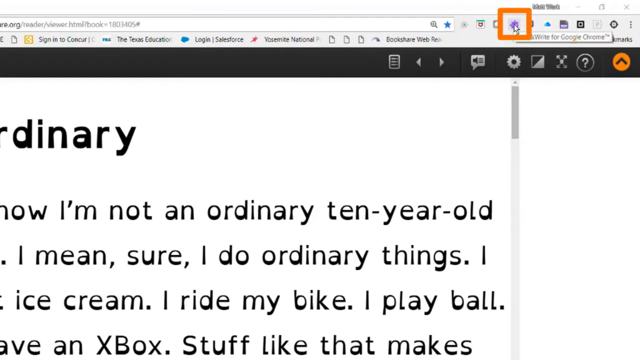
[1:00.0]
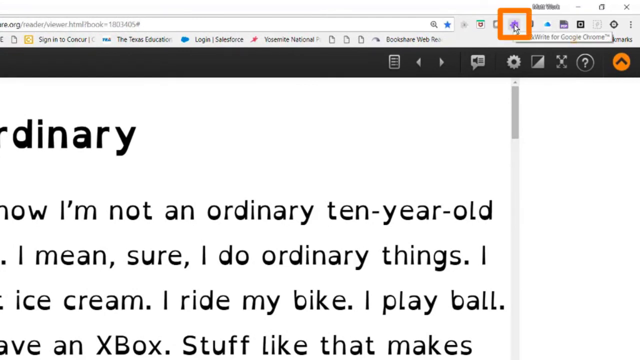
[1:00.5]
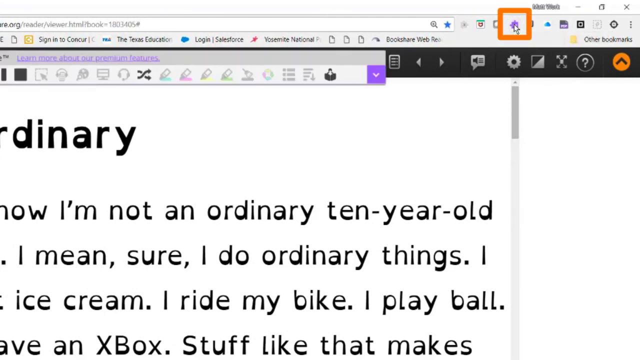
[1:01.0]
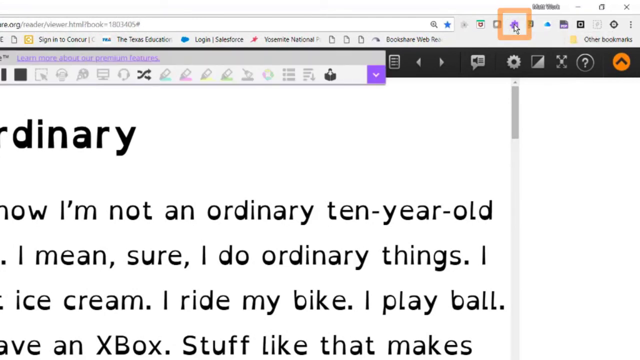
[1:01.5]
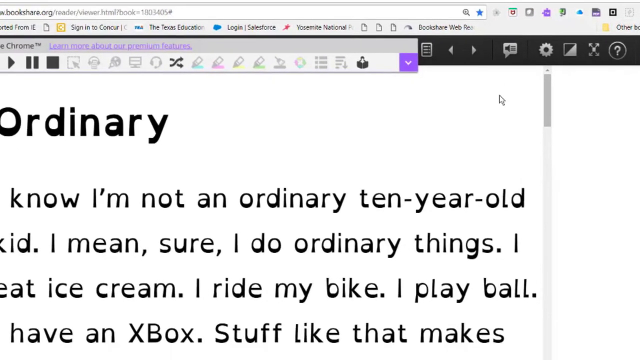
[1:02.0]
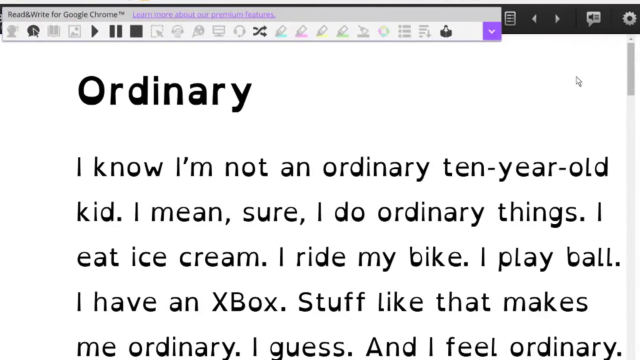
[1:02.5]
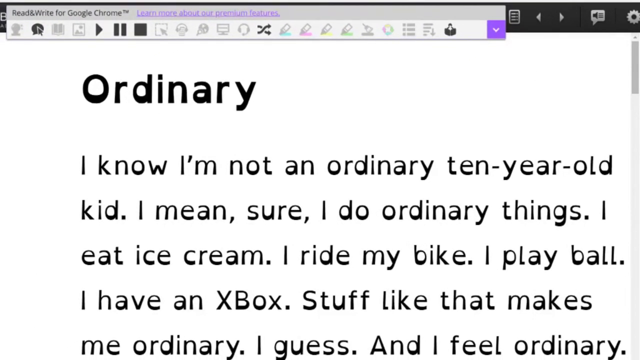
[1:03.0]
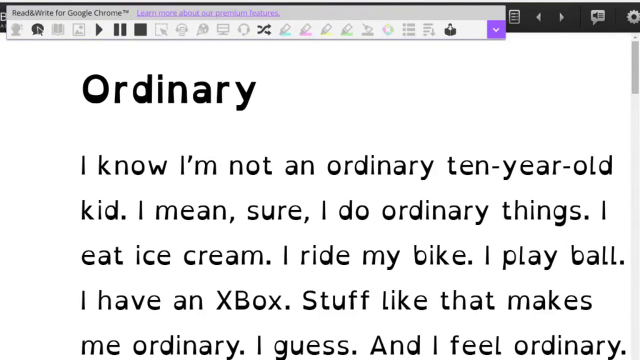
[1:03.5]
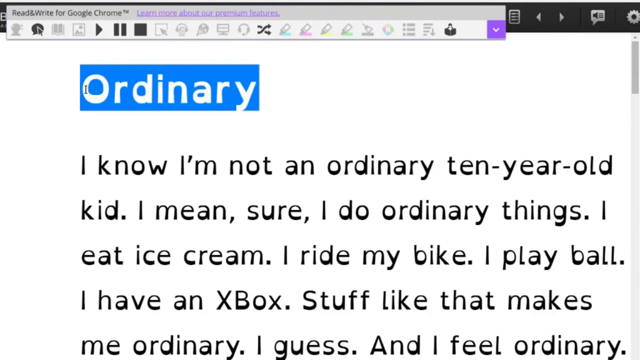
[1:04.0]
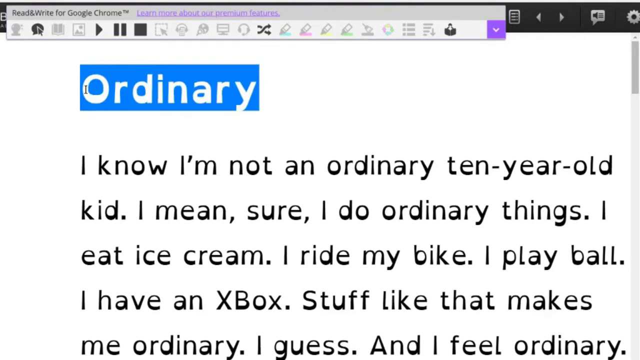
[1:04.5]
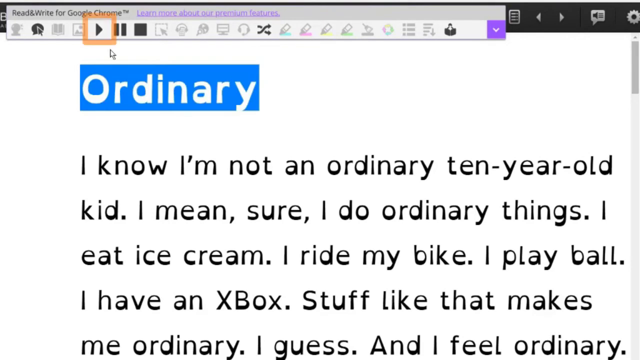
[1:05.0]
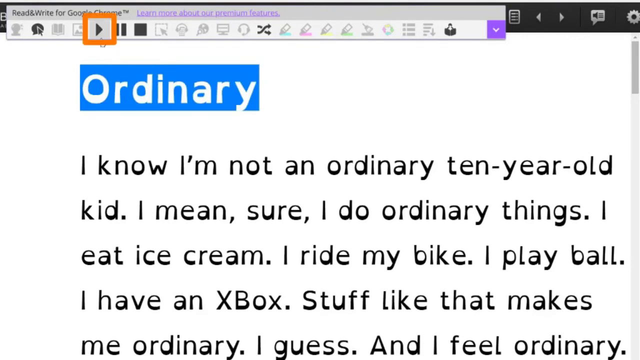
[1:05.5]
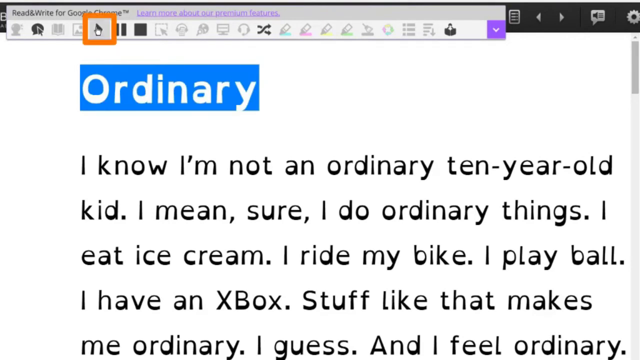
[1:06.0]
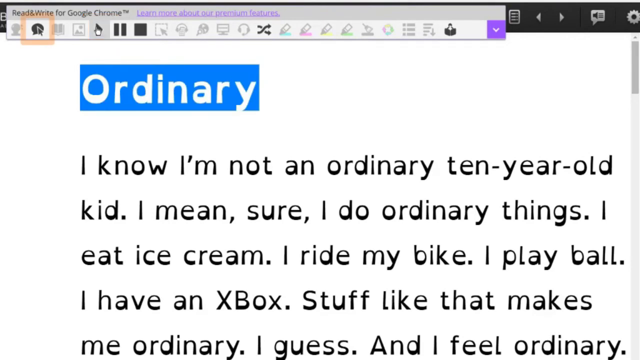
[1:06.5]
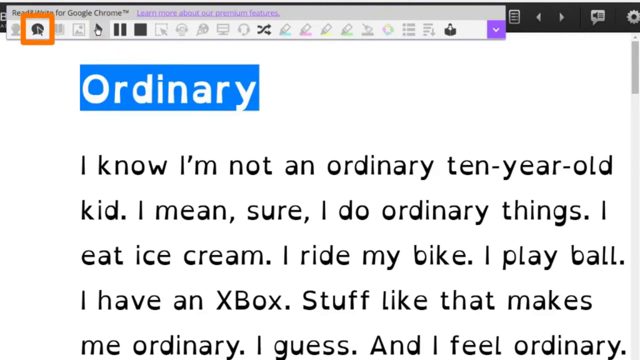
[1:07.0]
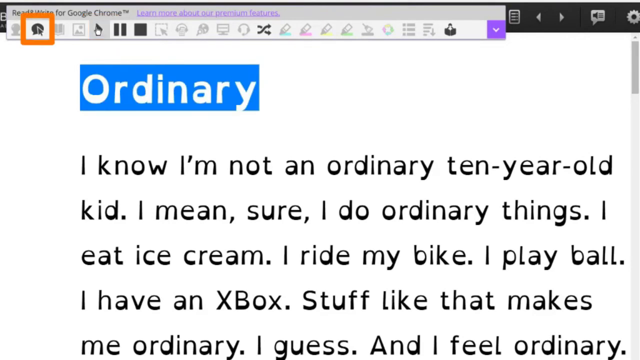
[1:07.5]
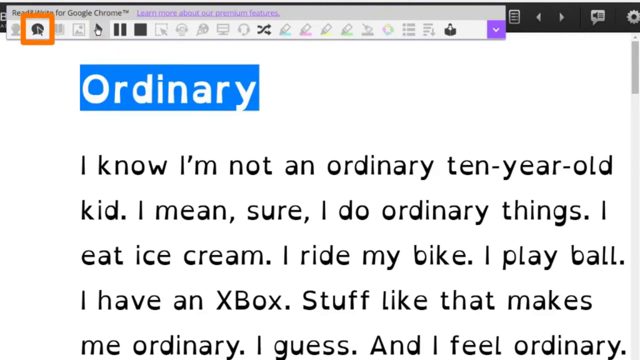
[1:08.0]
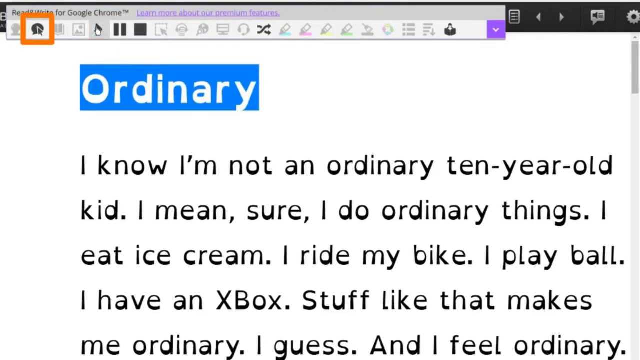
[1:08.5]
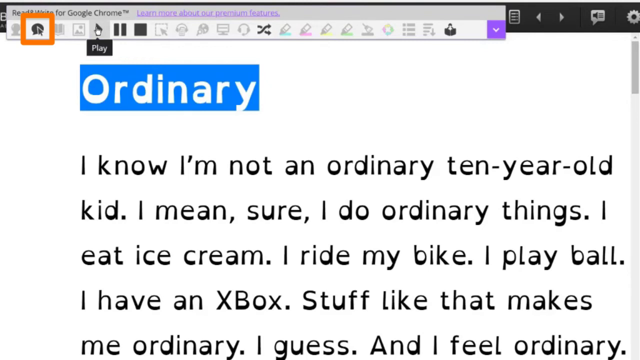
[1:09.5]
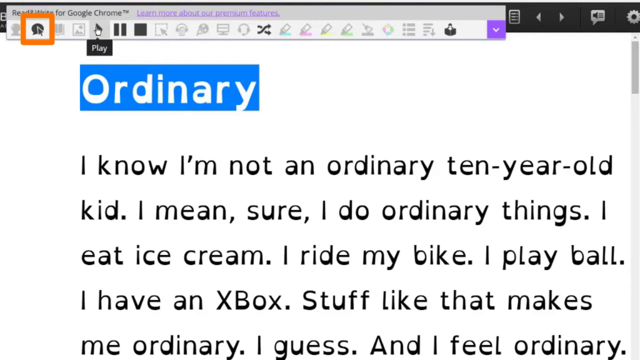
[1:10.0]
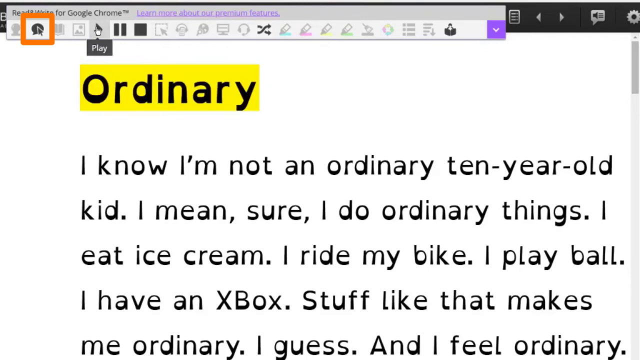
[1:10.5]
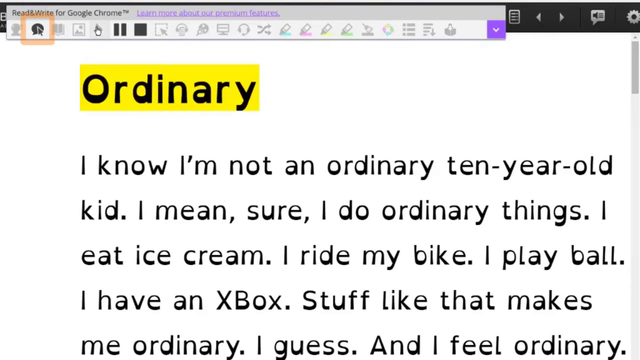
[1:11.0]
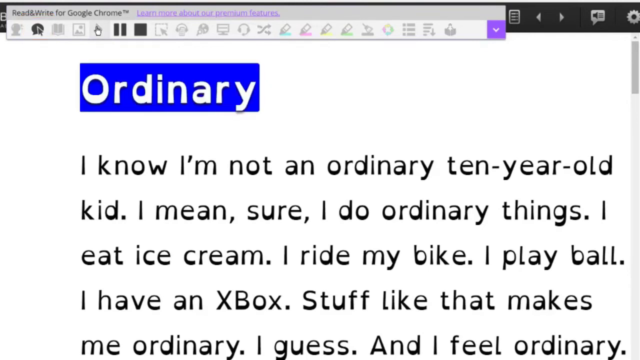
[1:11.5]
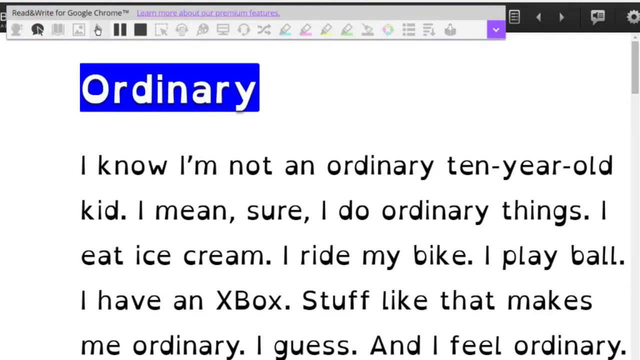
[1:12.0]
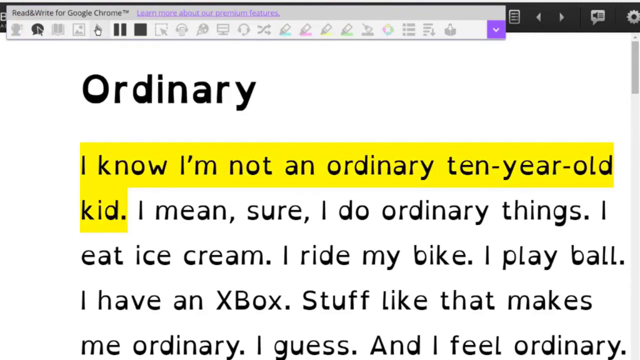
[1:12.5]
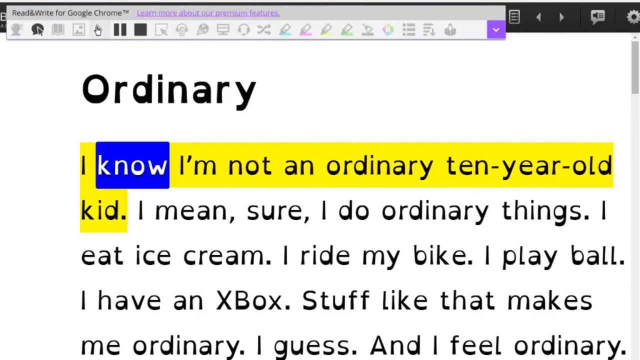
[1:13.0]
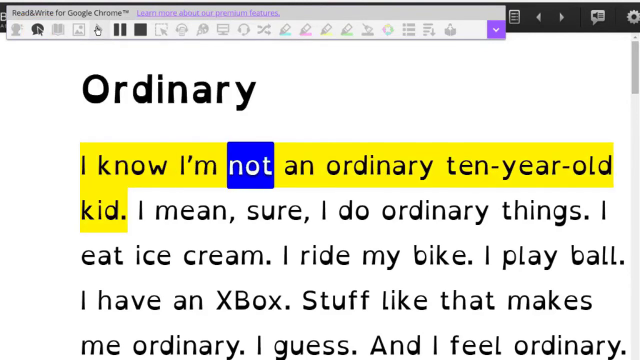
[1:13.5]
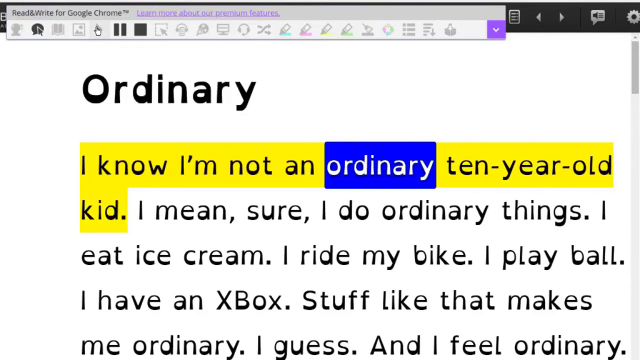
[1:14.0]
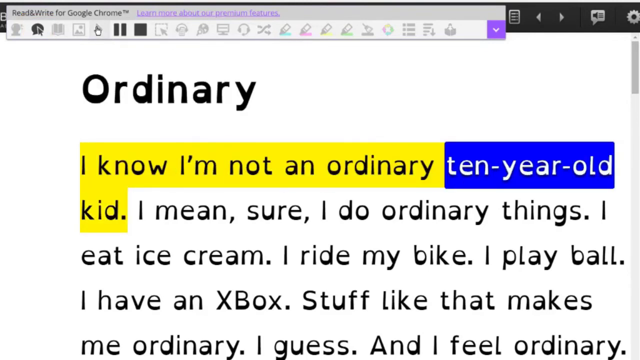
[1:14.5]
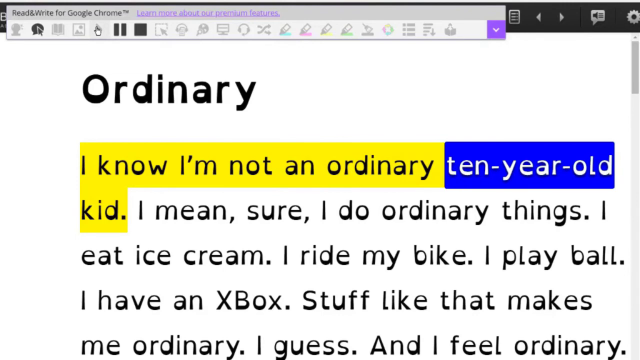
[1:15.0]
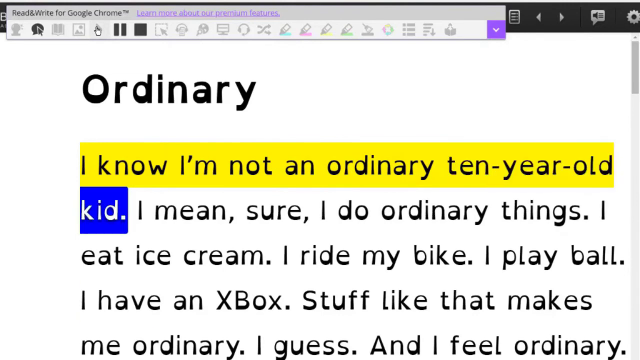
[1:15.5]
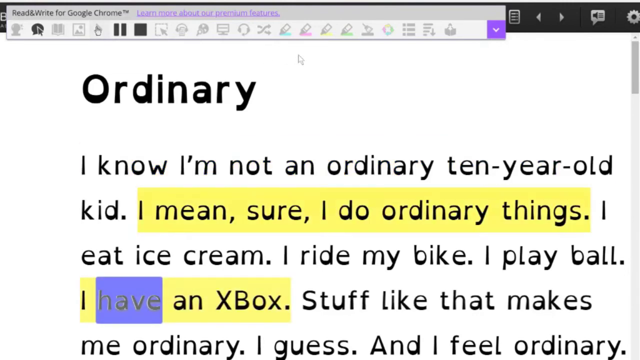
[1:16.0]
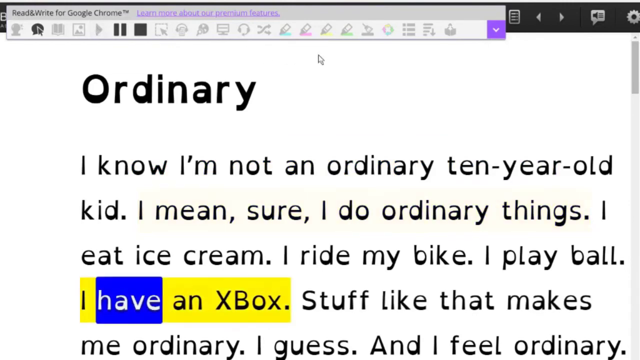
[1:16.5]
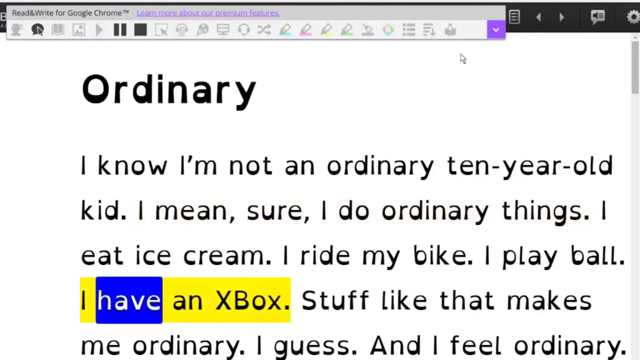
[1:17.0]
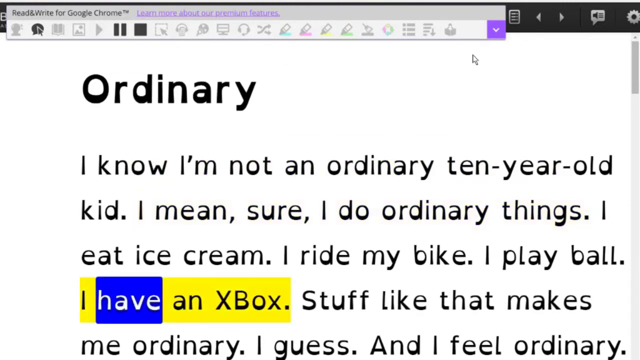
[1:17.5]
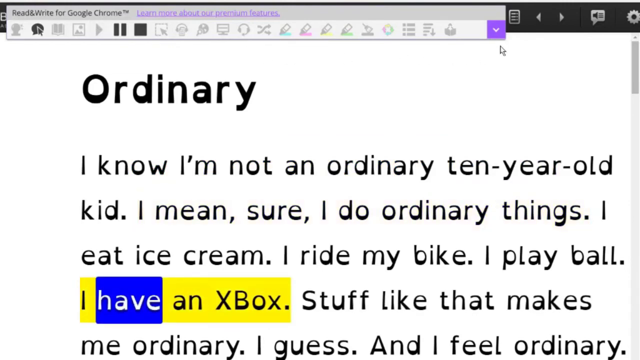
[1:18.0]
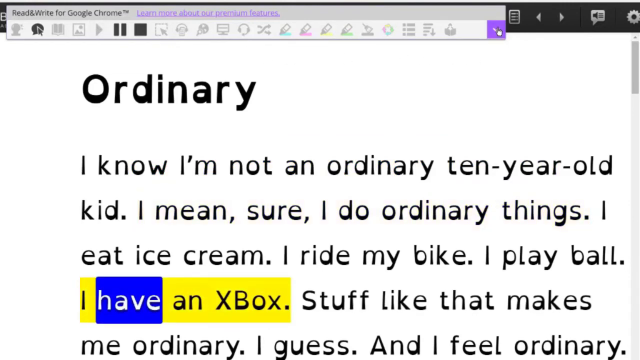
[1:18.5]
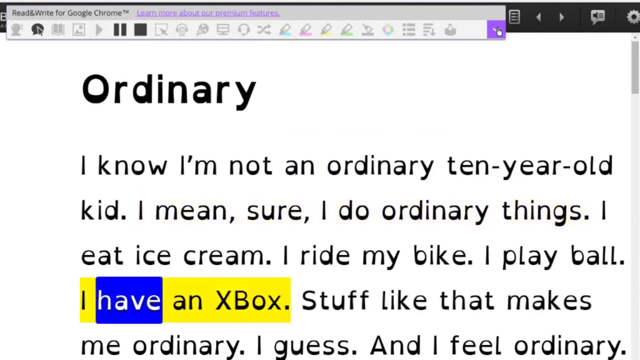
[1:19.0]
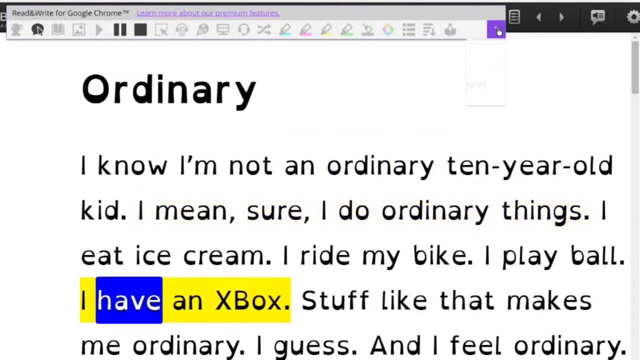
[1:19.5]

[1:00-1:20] The user clicks the extension, which opens an interface titled Read&Write for Google Chrome with several options, including play, pause, and stop buttons and several colors of highlighter. The user highlights the first word on the book page, "ordinary," which appears highlighted in blue. They then highlight the Play button on the extension with the orange square and click it, and the word "play" pops up. The extension then appears to be reading the book to the user, shown by the text being highlighted in yellow with a blue highlight moving word by word through the text. The user then hovers over the extension again to reveal another feature.